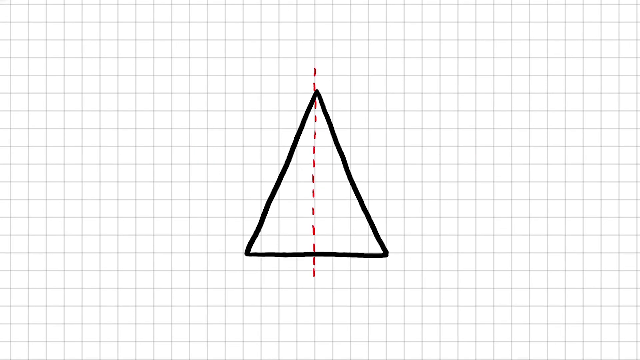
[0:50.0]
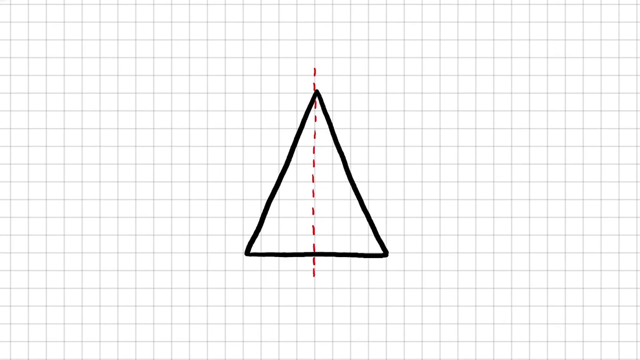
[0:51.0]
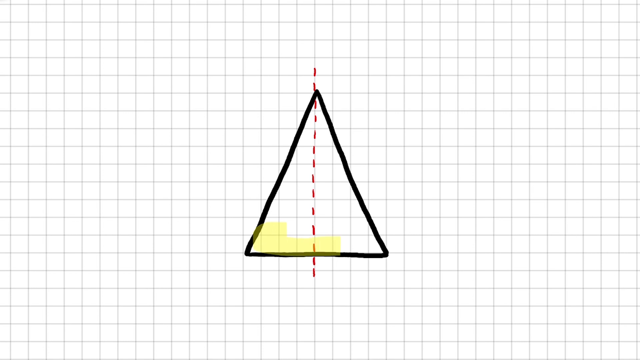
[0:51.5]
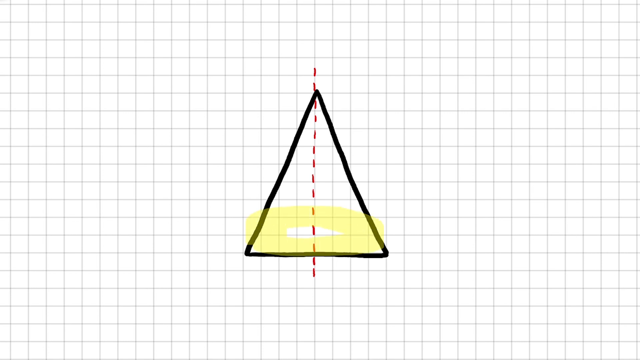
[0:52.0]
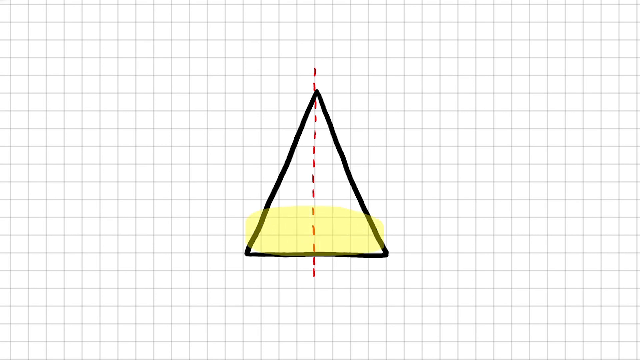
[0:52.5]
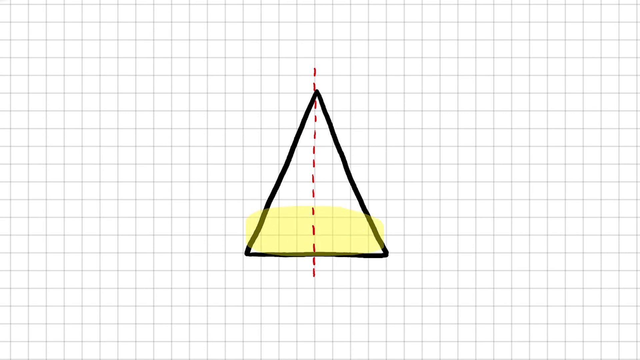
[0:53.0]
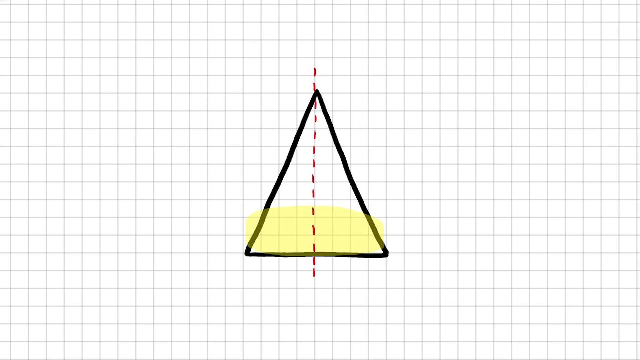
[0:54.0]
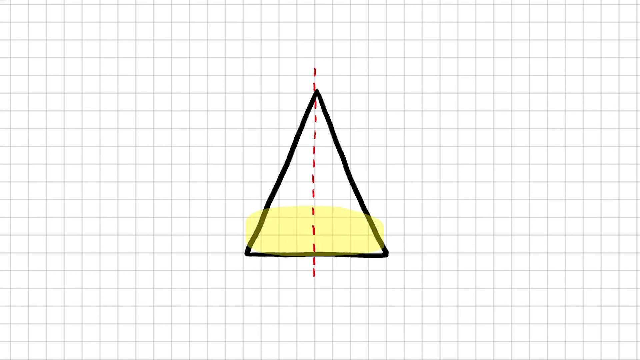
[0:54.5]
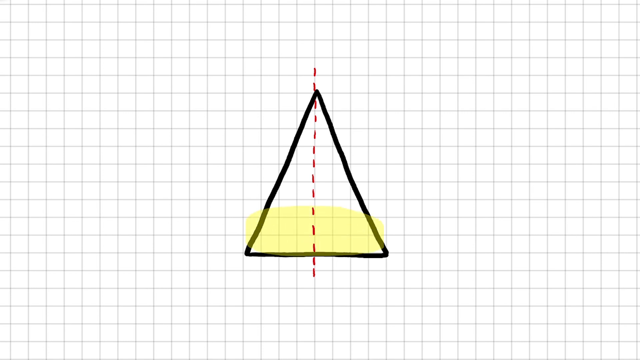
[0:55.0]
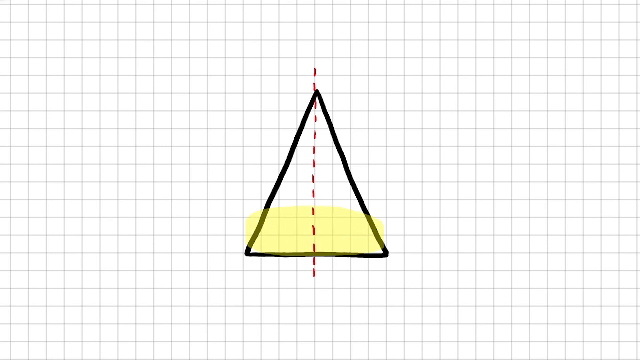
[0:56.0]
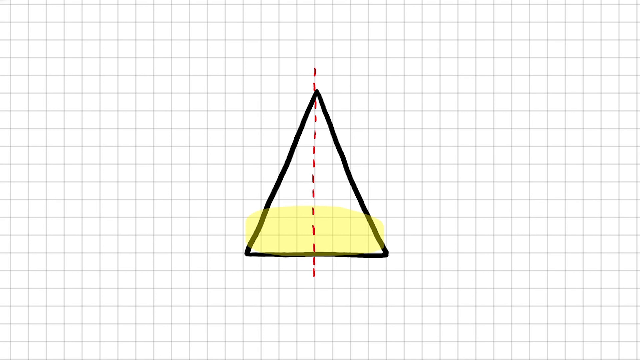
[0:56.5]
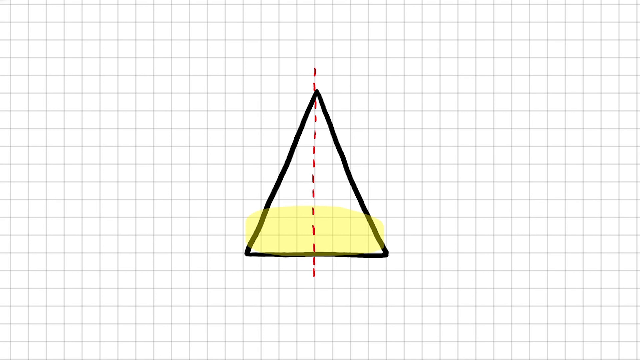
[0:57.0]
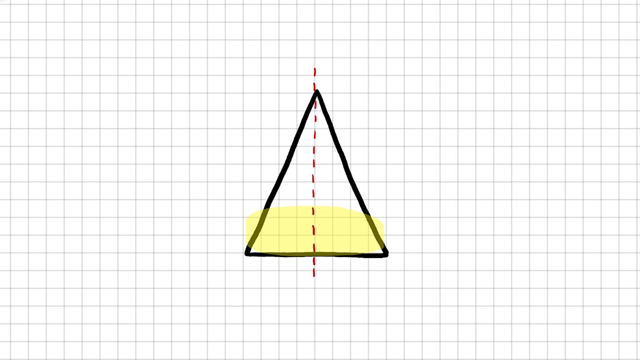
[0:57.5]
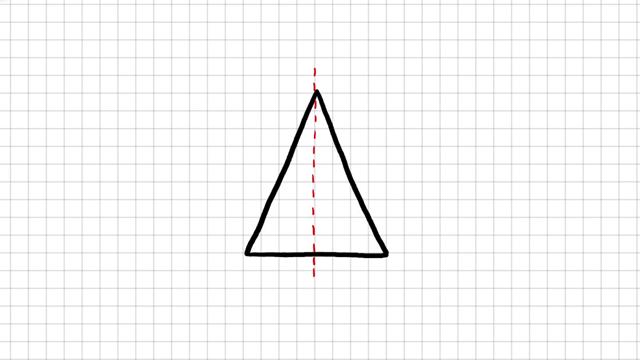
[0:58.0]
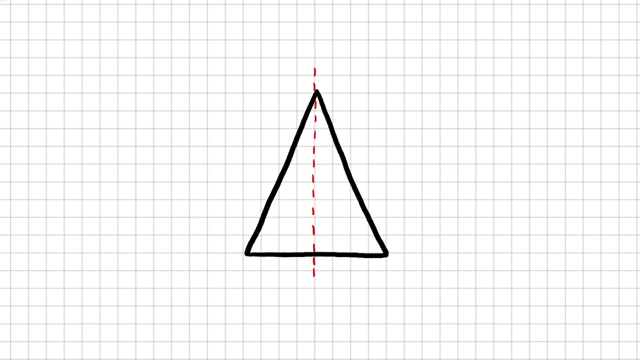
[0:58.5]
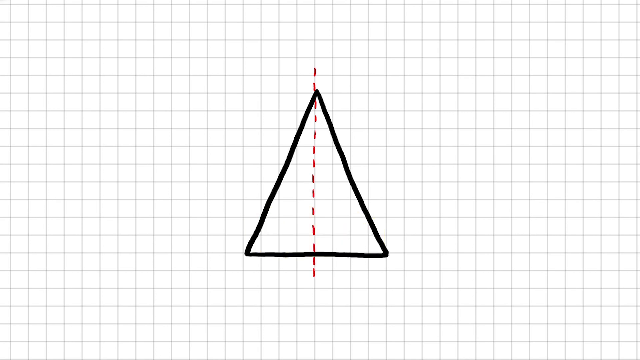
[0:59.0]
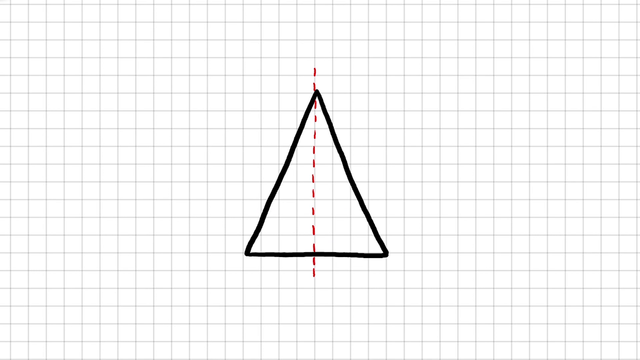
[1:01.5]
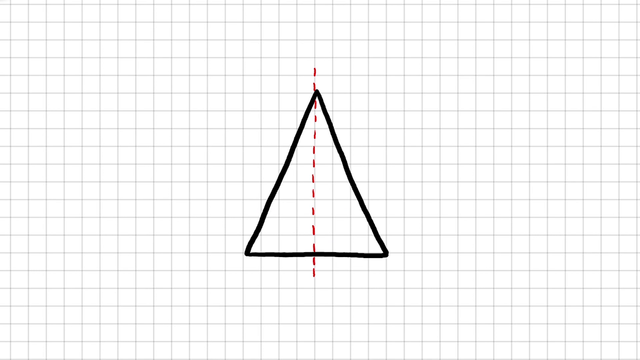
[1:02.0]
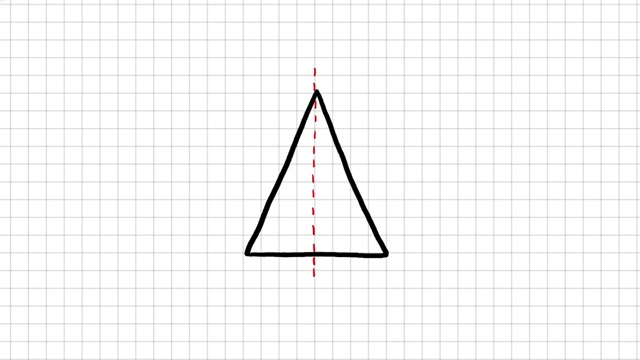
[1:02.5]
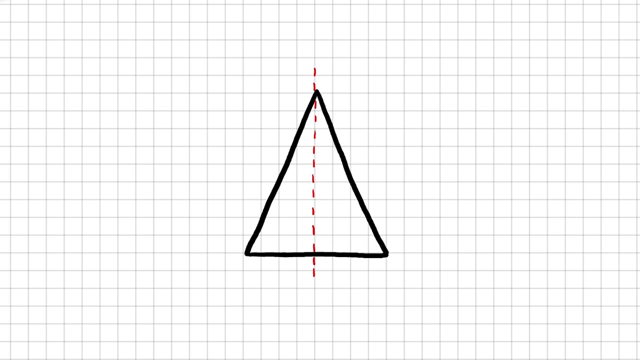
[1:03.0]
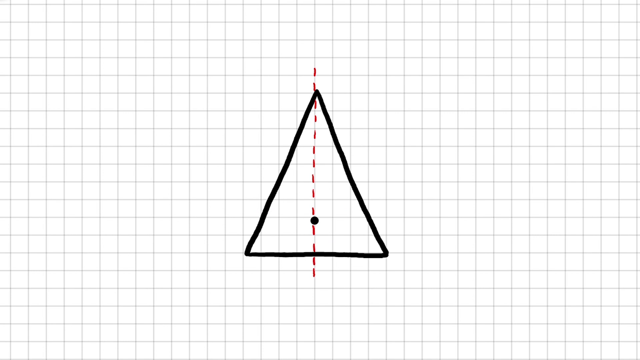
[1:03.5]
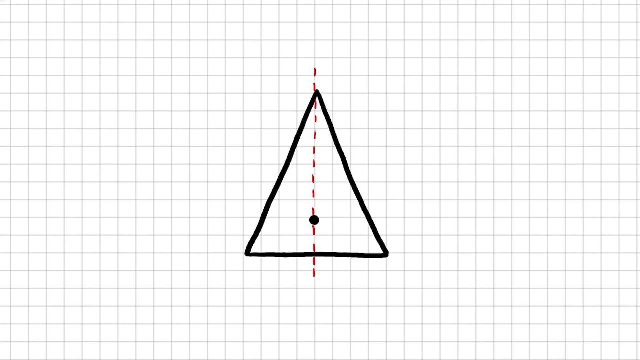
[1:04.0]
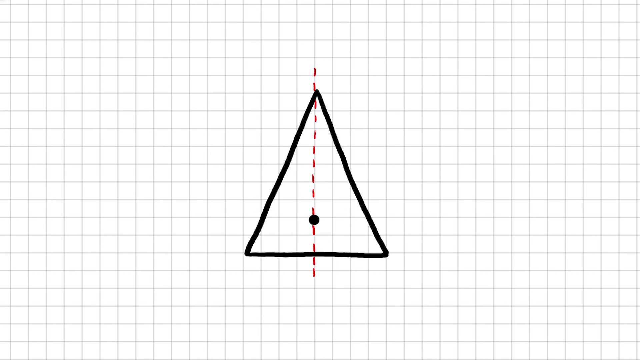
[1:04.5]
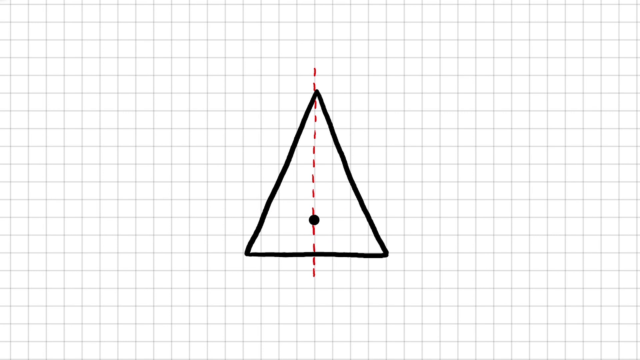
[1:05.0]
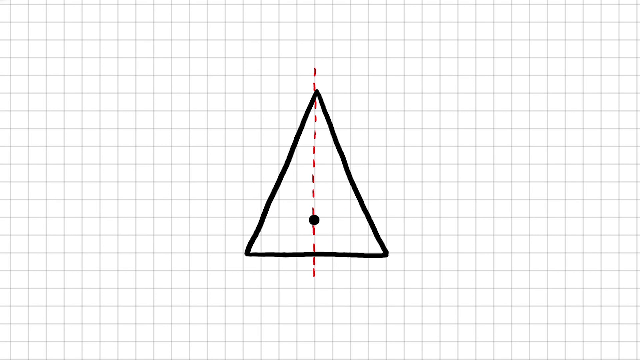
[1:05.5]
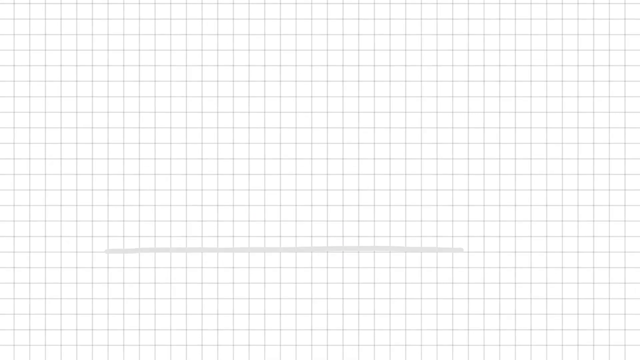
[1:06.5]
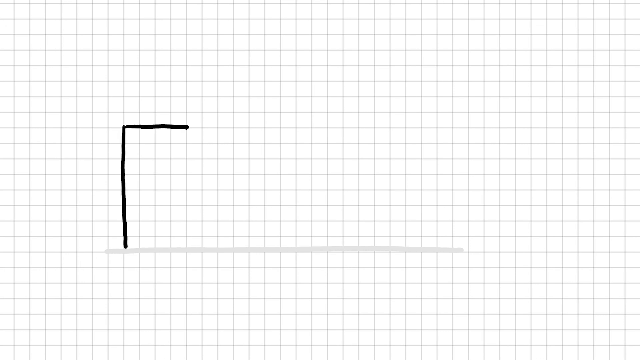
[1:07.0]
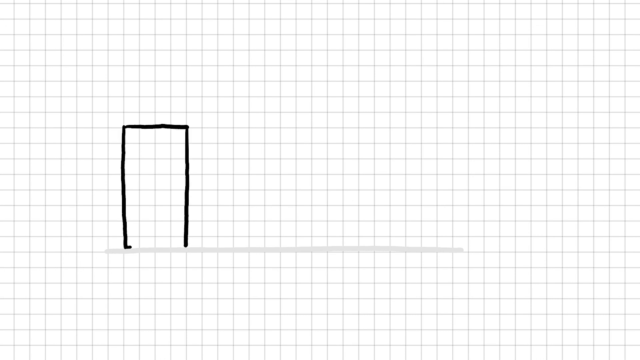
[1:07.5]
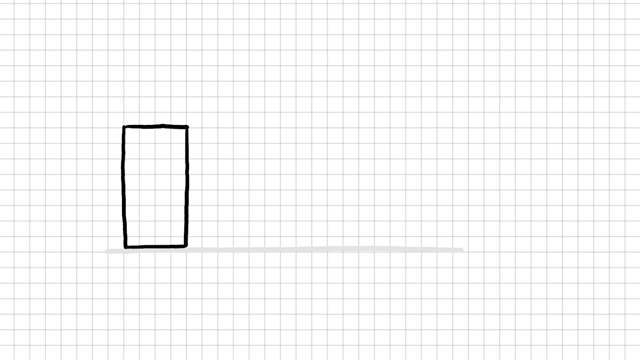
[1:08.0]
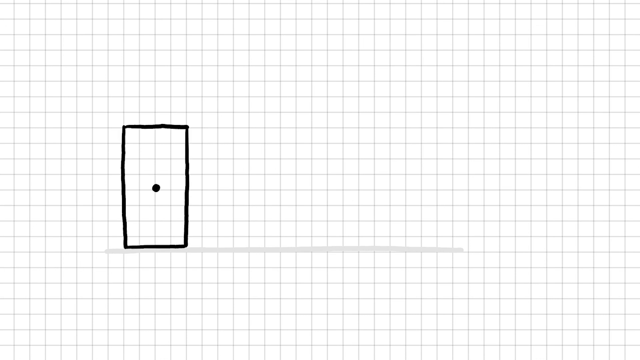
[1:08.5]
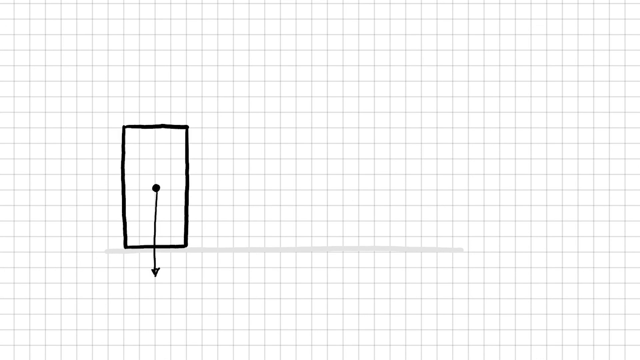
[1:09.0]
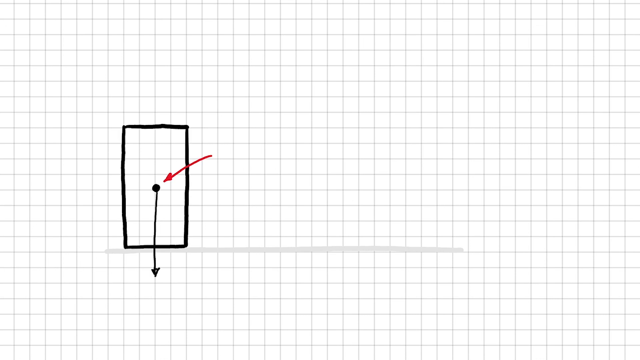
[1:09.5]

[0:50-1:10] A triangle is shown with red dotted lines in between it, indicating the distribution of forces. A rectangle then appears with arrows pointing upwards, indicating how forces are evenly distributed on the shape.